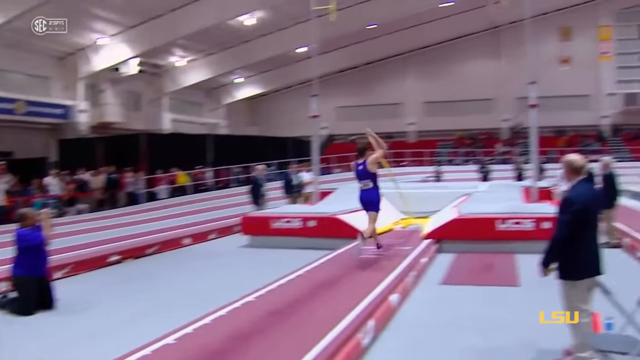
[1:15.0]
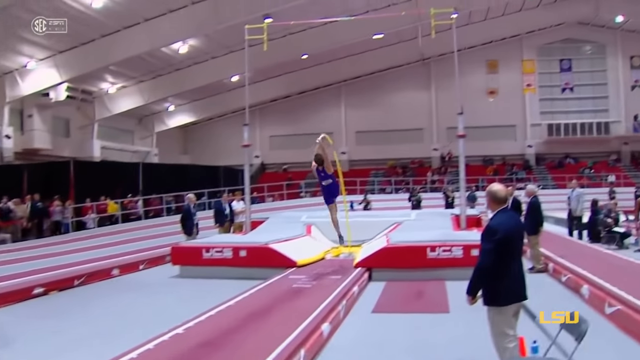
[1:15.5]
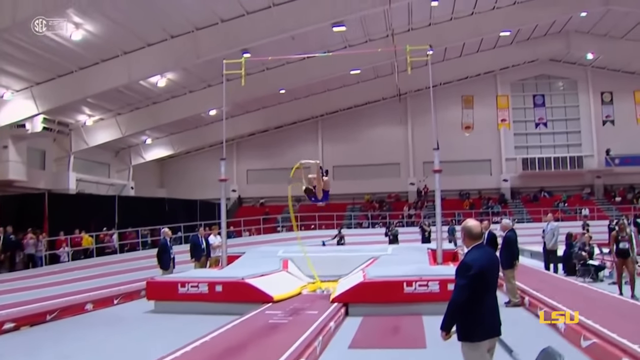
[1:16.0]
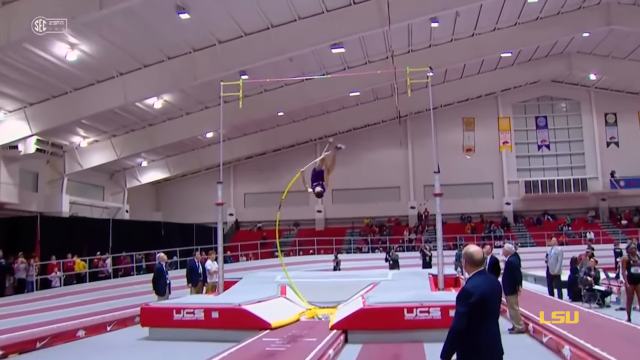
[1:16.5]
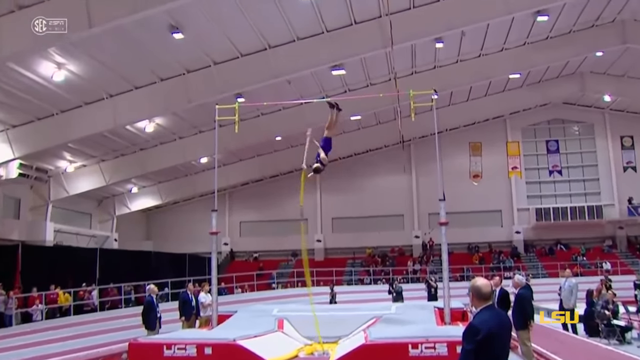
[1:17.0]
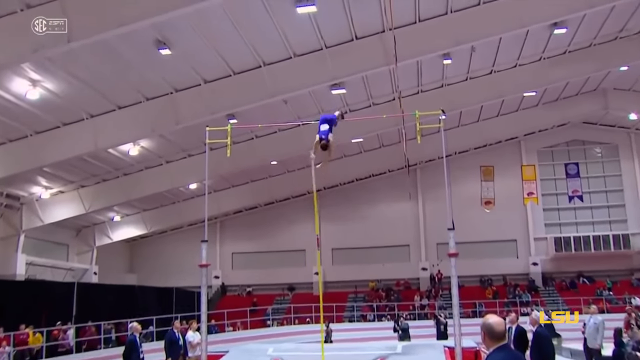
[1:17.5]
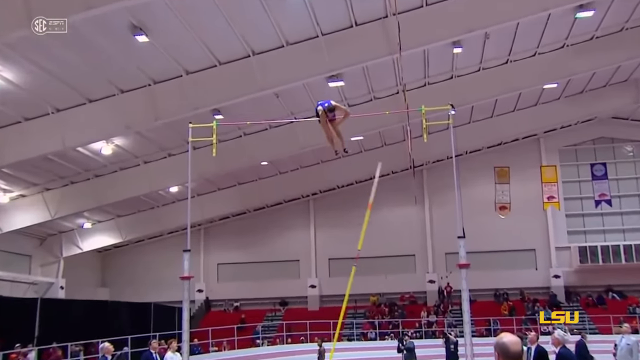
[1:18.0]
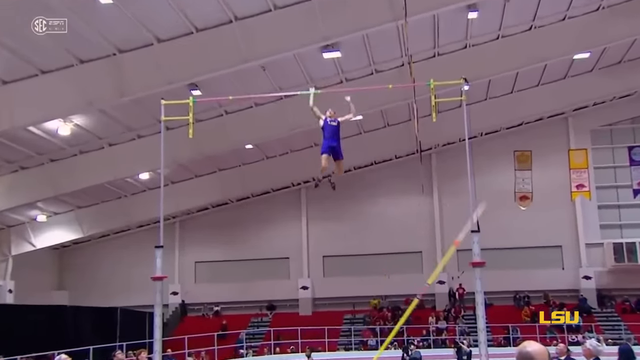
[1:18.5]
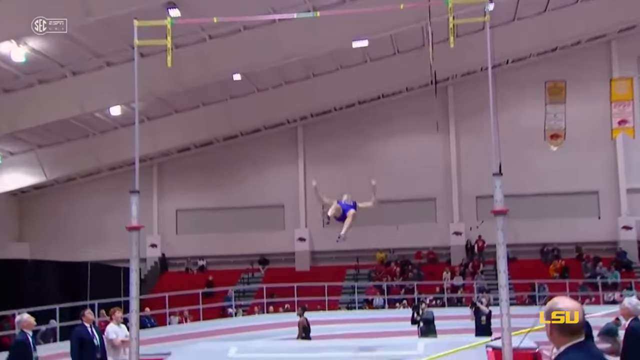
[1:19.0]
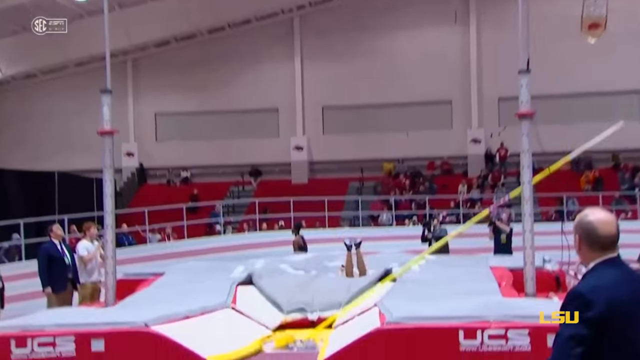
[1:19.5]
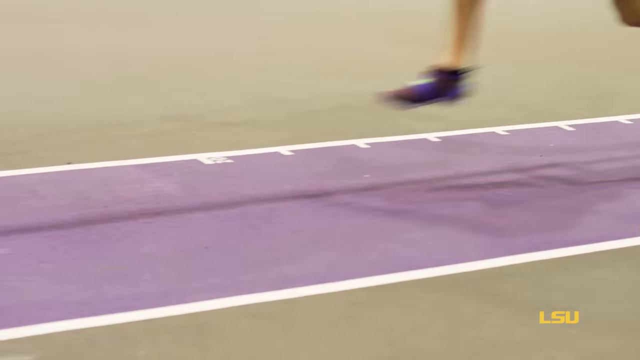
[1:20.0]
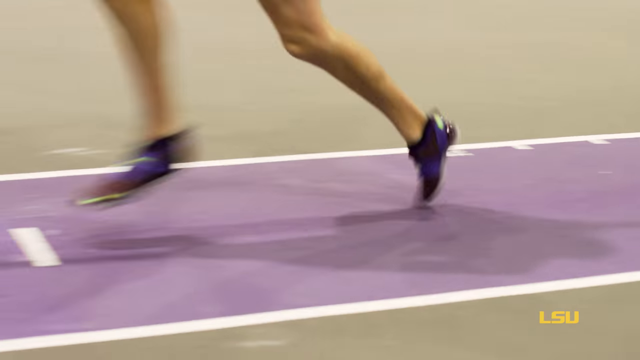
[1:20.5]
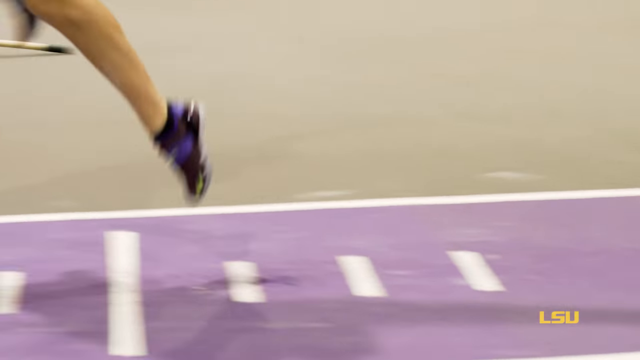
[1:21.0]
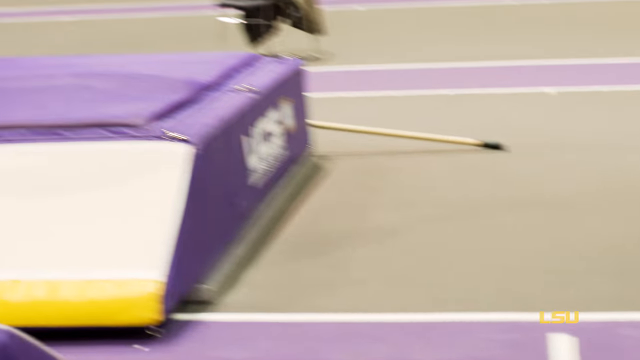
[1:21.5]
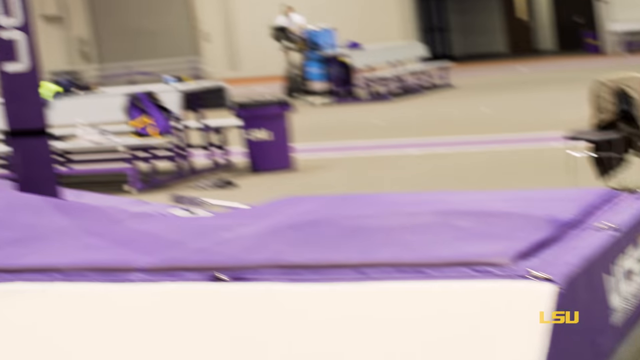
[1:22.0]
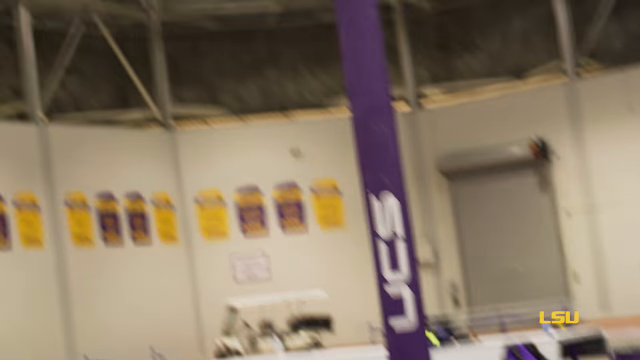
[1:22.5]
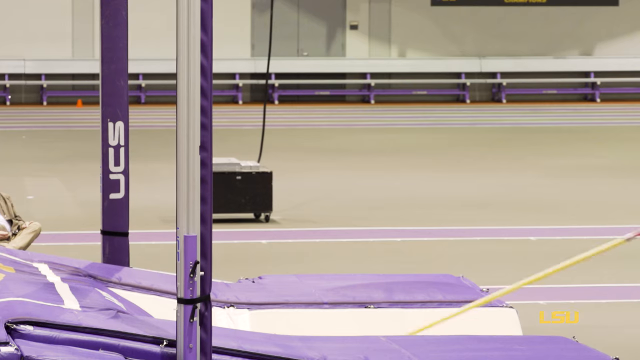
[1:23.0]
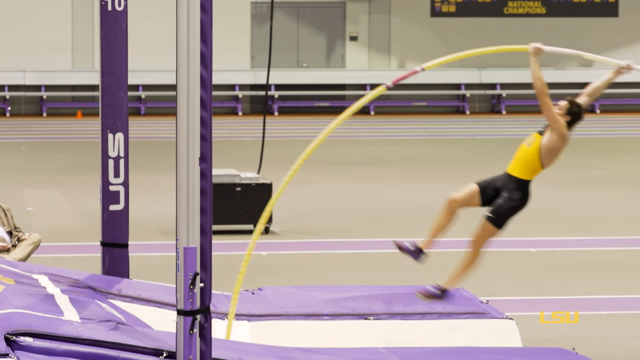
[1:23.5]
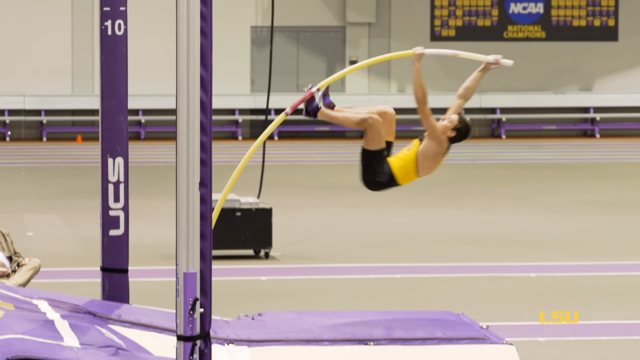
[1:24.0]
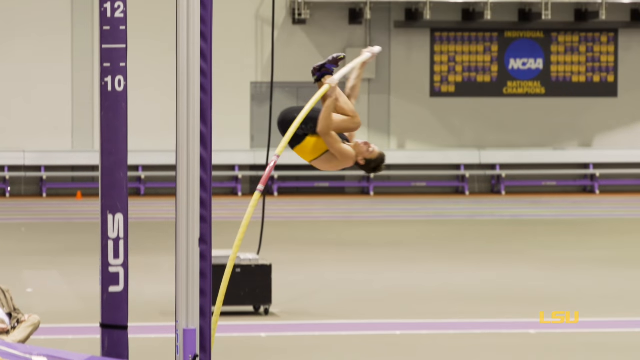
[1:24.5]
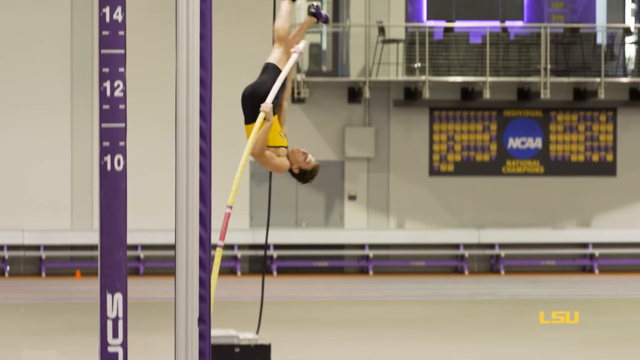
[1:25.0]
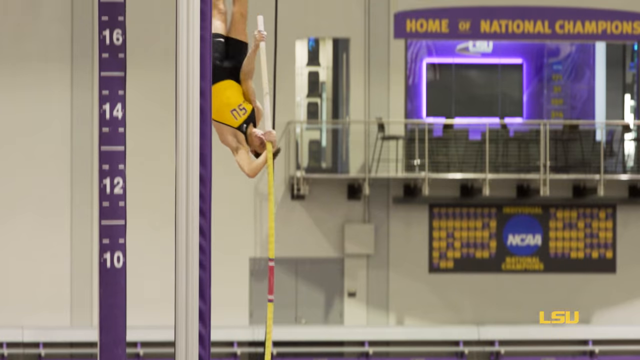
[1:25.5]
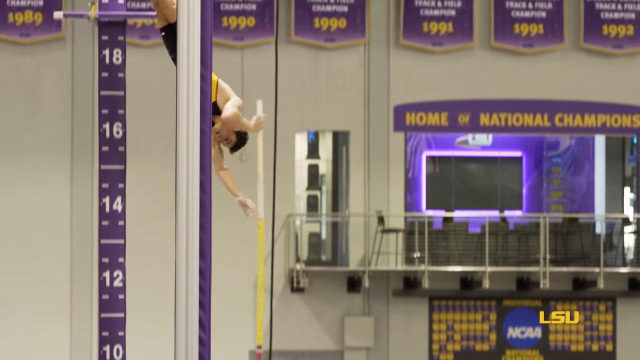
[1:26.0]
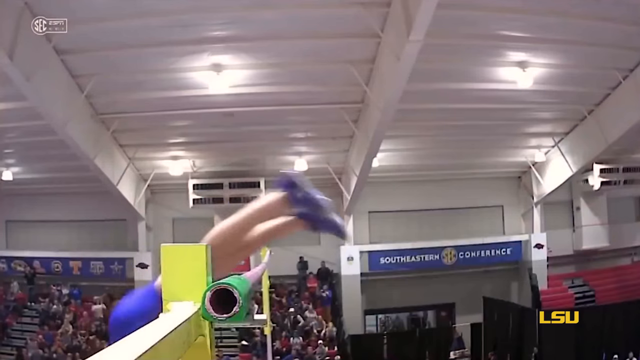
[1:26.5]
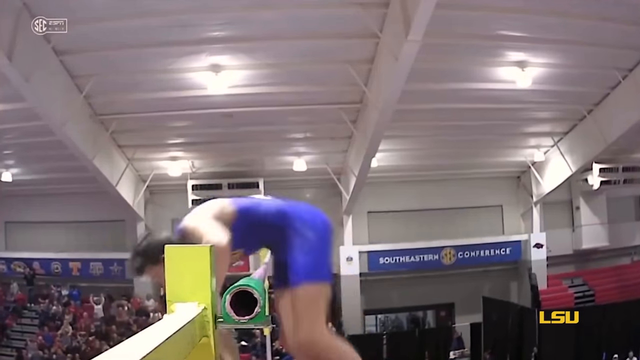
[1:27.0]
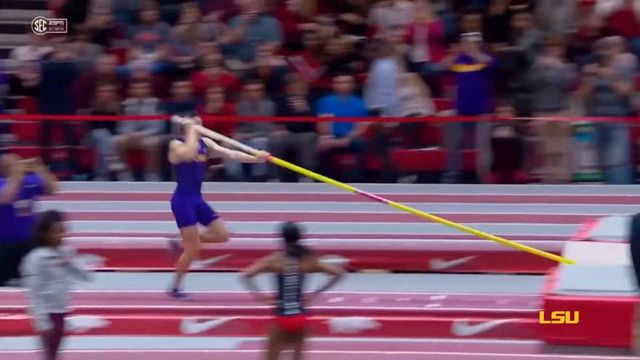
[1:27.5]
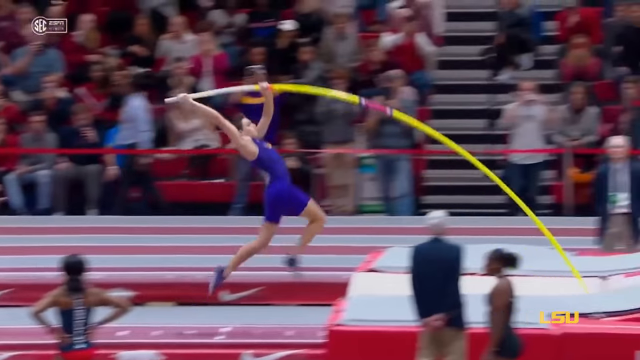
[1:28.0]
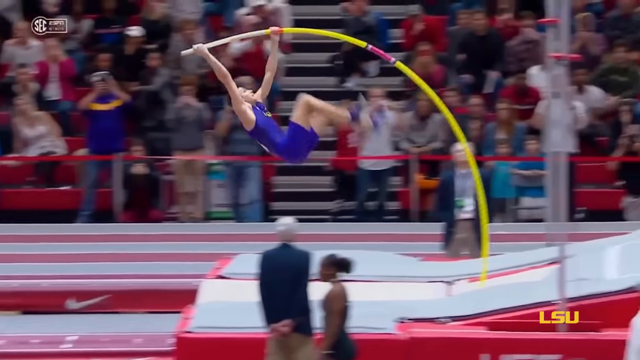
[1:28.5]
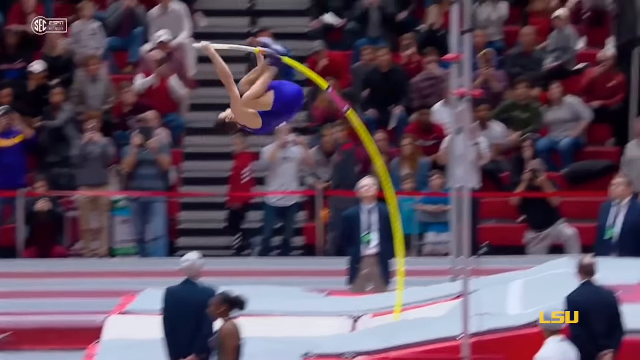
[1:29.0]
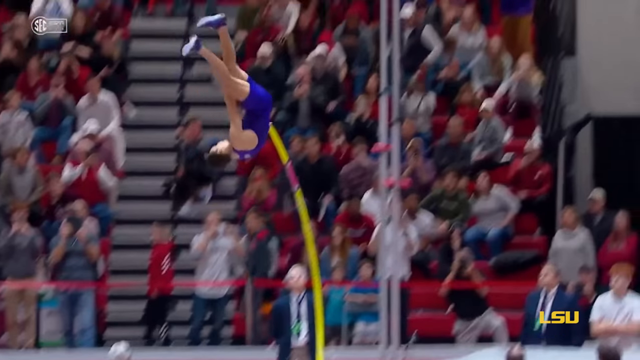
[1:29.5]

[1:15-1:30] He successfully hops over the bar. Several close-ups show him running down the line in his Nike shoes; the line is purple. A medium shot shows the pole bending as he pushes himself up into the air, successfully. Earlier footage from the competition shows him clearing the highest point, while people in the crowd watch in suspense. A flag of a different college is visible, so this is probably that college's competition rather than LSU's.